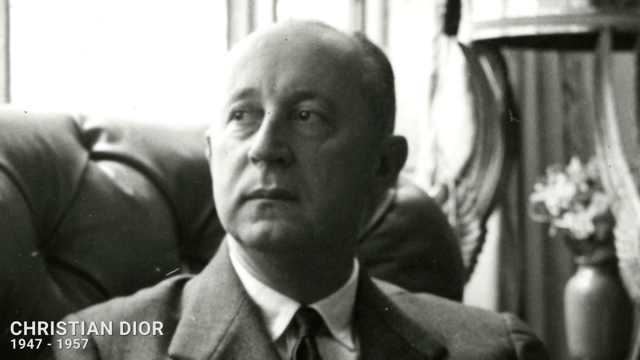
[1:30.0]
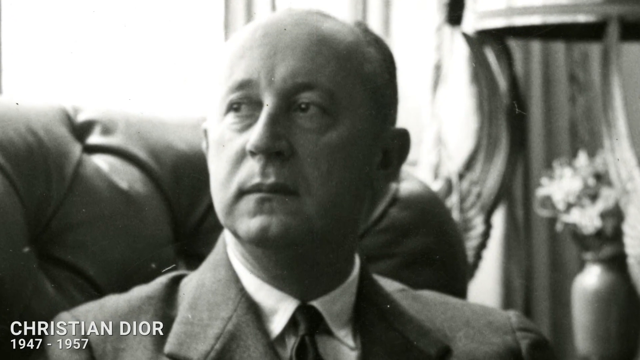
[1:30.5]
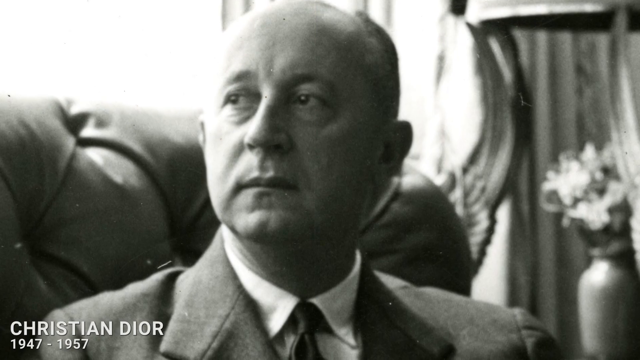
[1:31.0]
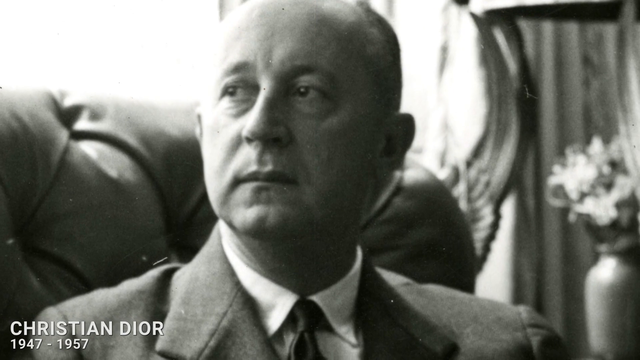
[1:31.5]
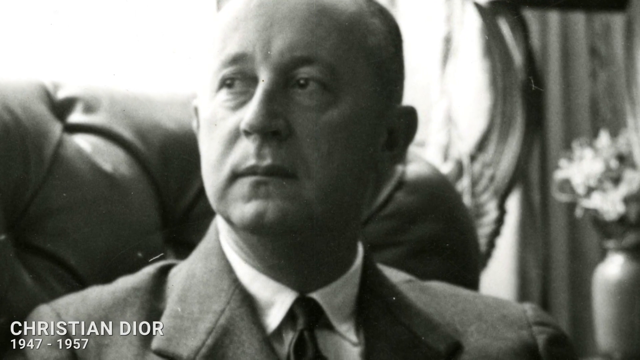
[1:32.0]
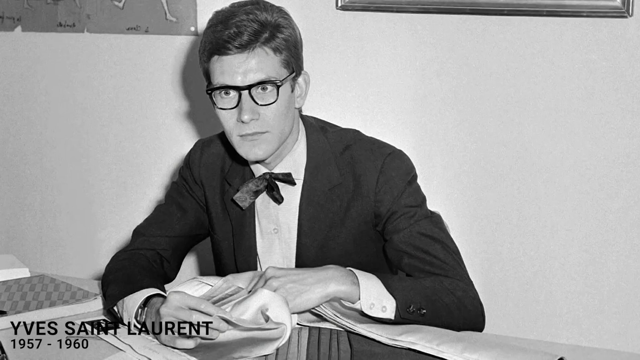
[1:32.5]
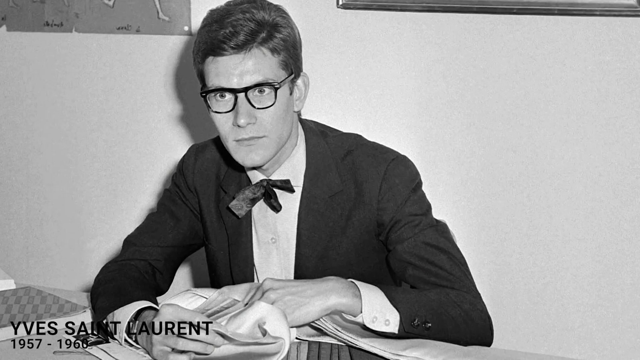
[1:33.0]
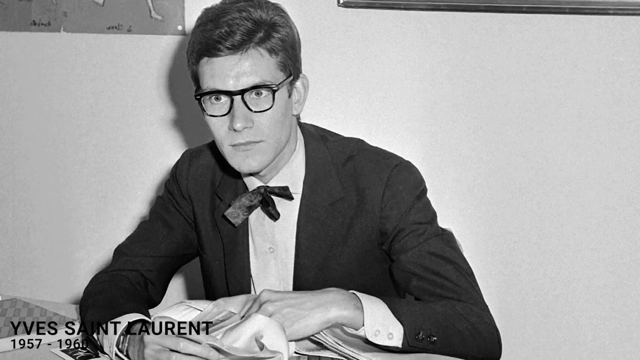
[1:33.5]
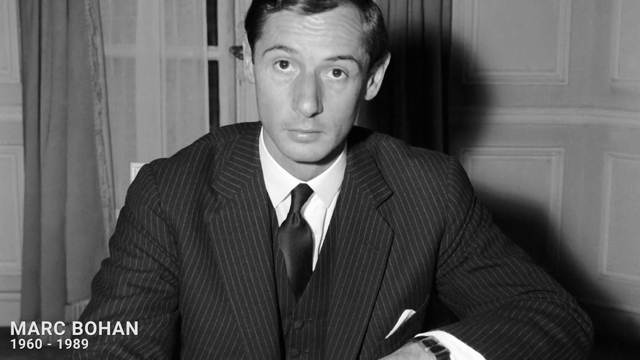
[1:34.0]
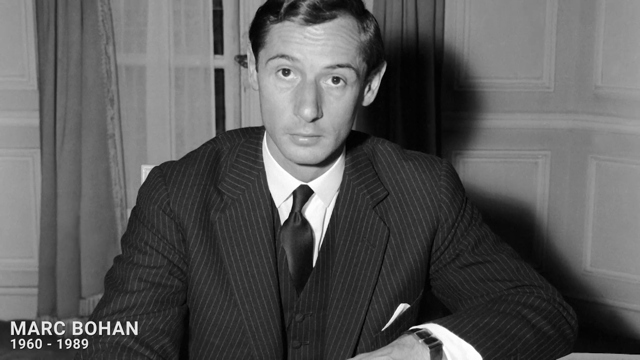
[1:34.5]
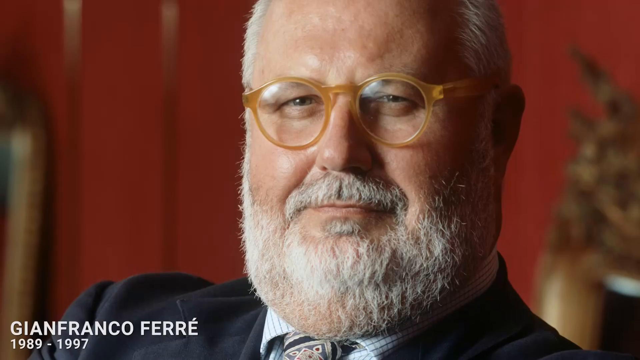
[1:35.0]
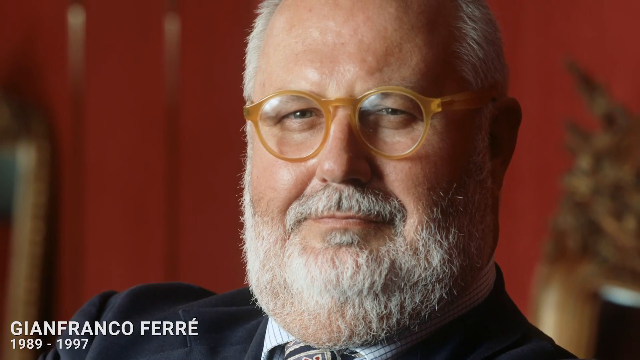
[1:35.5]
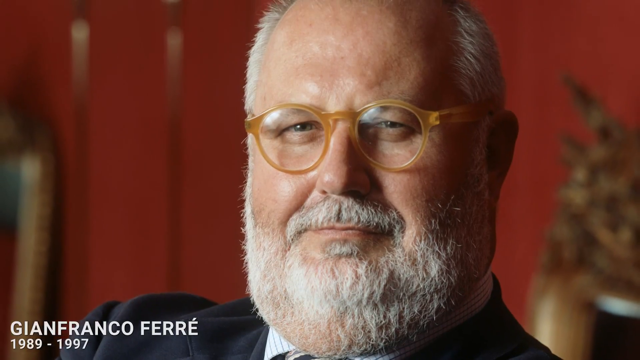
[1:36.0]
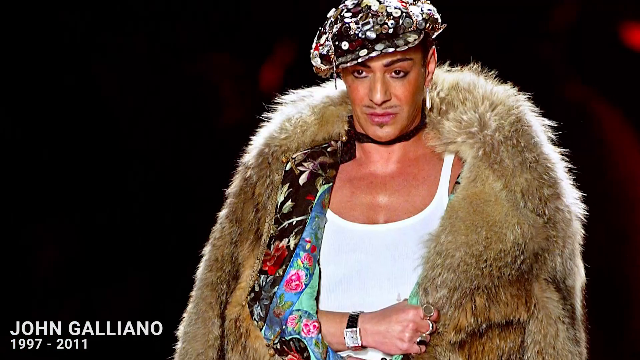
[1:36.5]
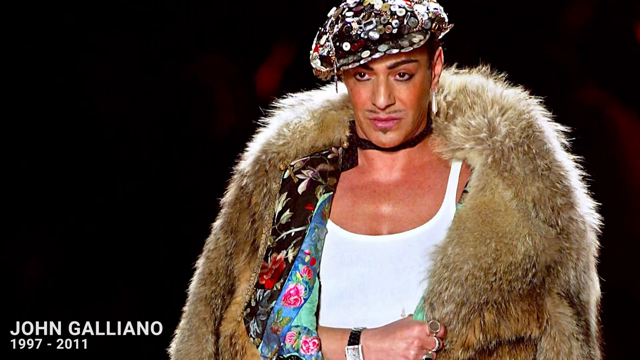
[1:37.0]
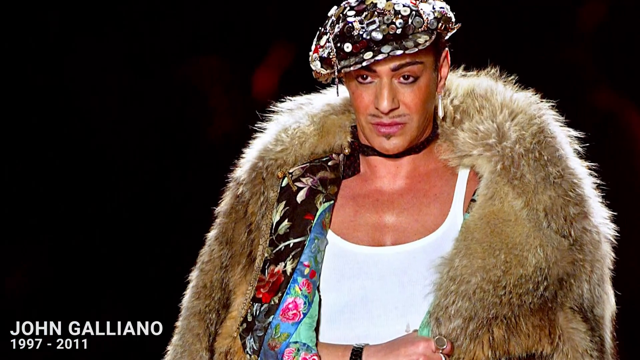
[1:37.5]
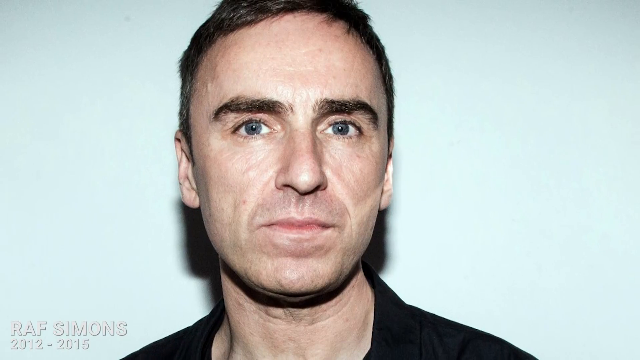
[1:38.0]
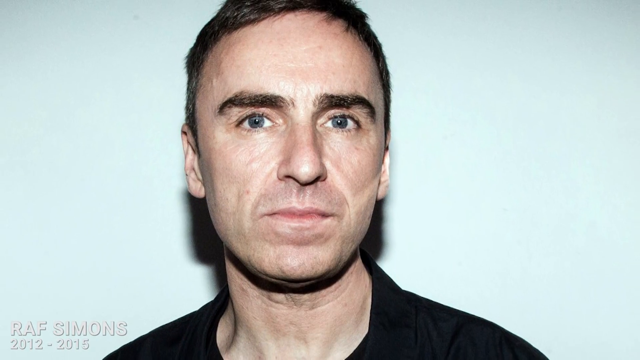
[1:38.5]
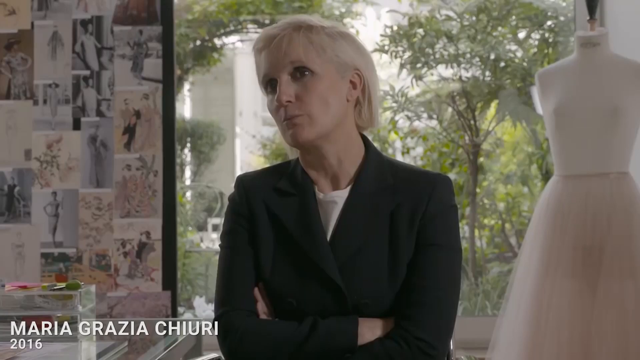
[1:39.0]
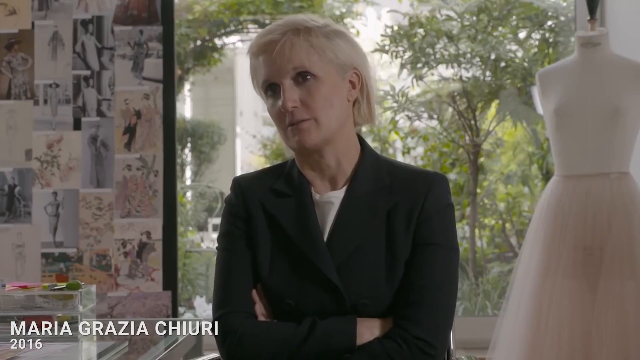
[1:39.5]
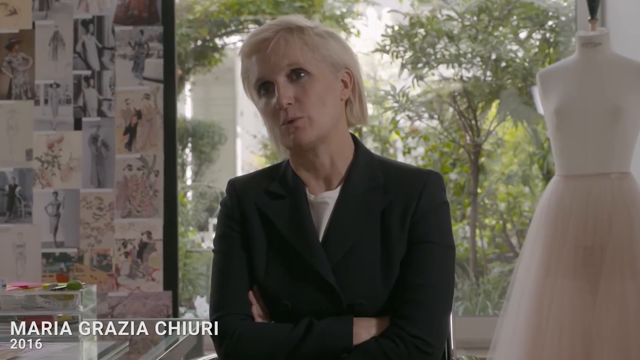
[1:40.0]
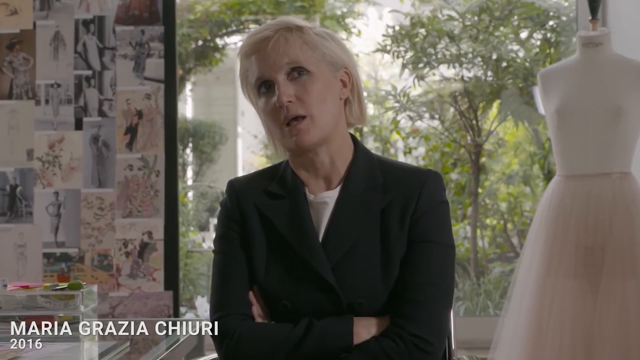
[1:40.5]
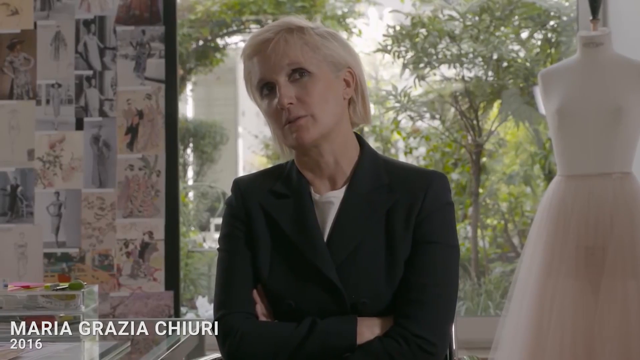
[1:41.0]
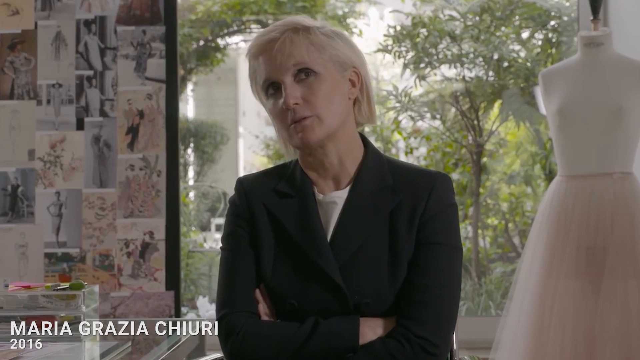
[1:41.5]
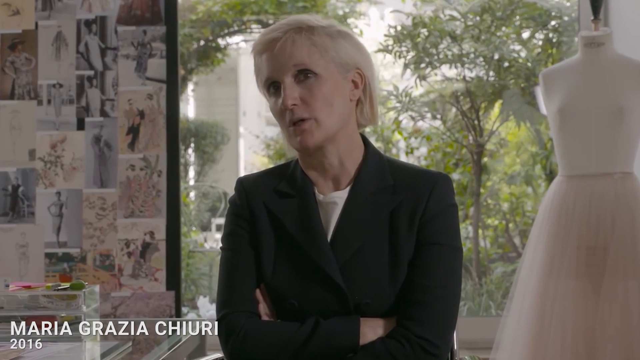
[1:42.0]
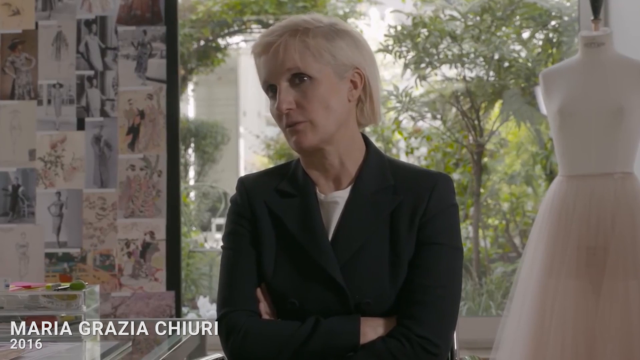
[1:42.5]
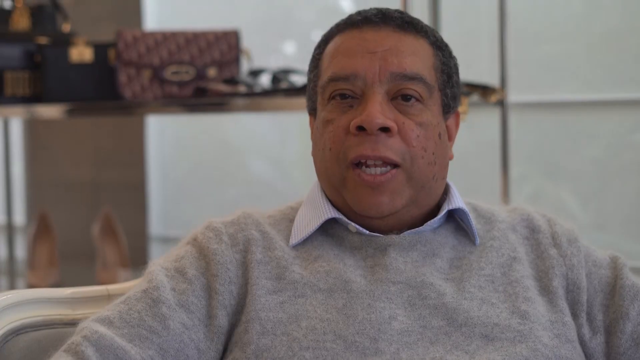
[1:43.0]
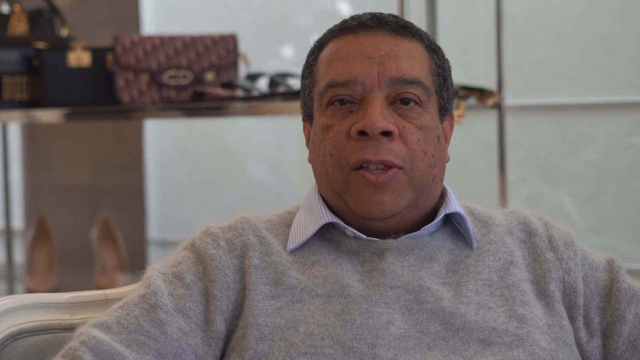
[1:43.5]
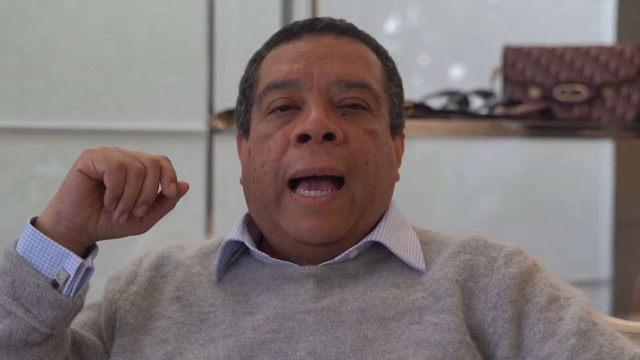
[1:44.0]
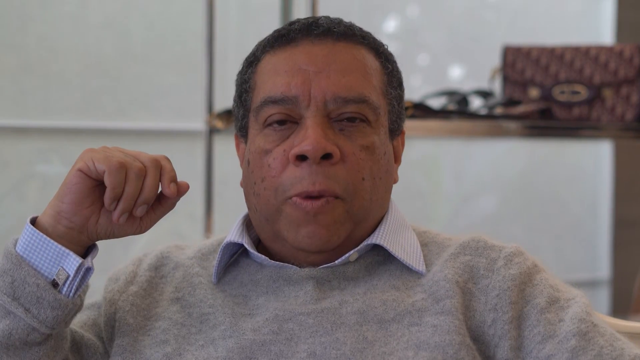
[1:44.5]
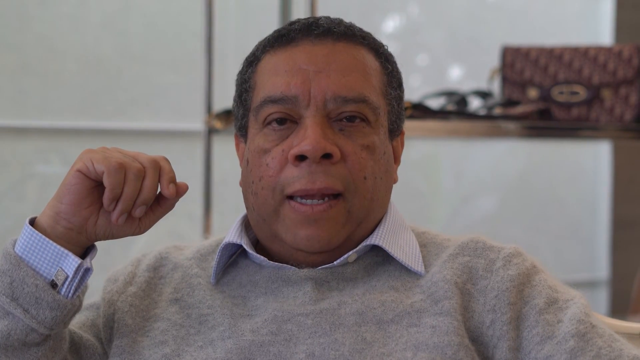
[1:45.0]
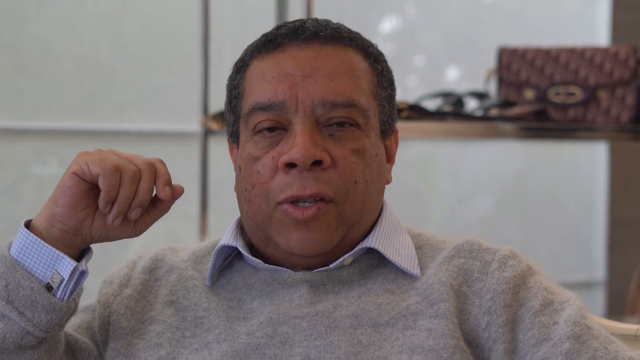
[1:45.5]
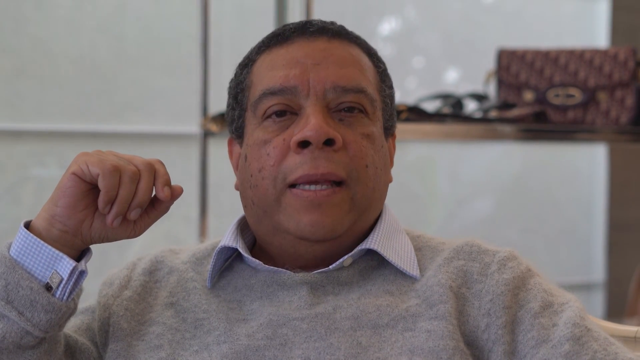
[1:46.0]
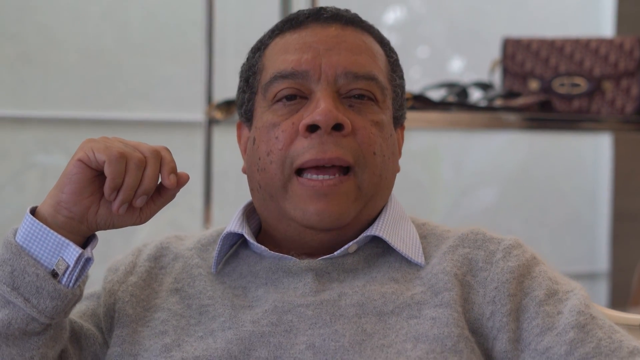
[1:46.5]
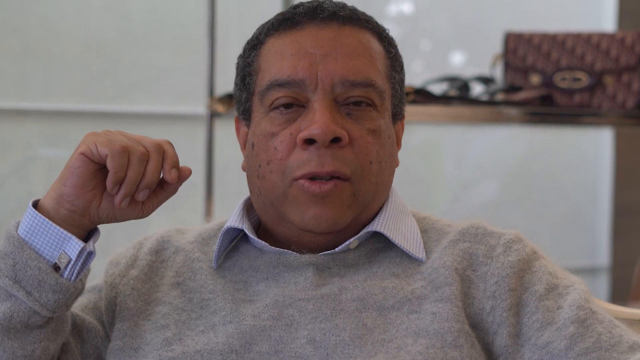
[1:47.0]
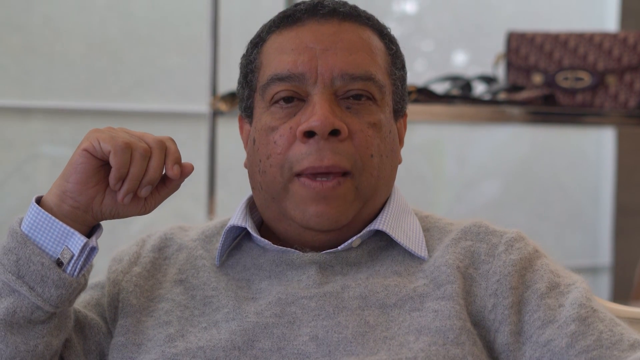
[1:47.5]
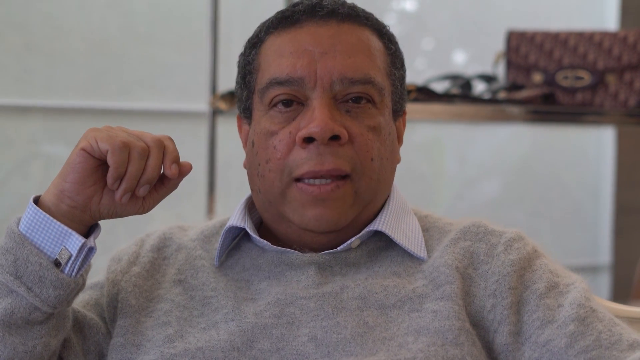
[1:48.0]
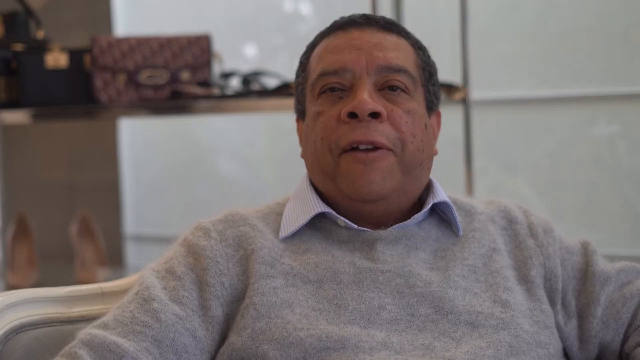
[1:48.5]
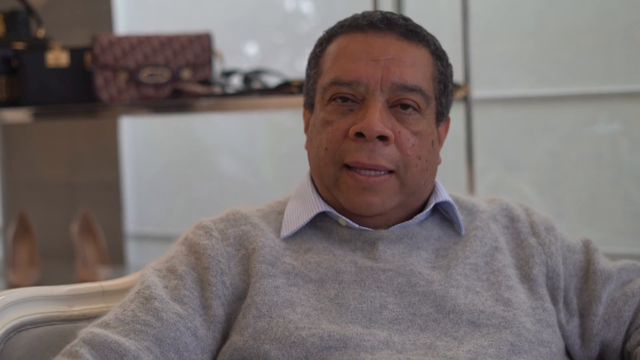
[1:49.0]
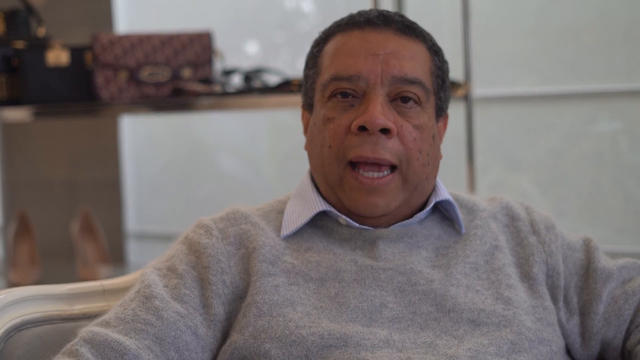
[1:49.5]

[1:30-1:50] A man who is kind of bald appears against a white image. Then another man appears wearing a suit with a white shirt; he wears glasses and has very short hair. After a white image, another man appears wearing an all-black suit. Next comes an extravagant-looking man with orange glasses and a white beard who looks like Santa Claus. Then a man called John Galliano appears, wearing a hat, a bear-like piece around his neck and a white tie. Another man appears, then a woman in a white suit who is talking, named Maria Gaziatiuri. Finally, a man called Mario in a gray outfit keeps talking, raising his arm and then lowering it.